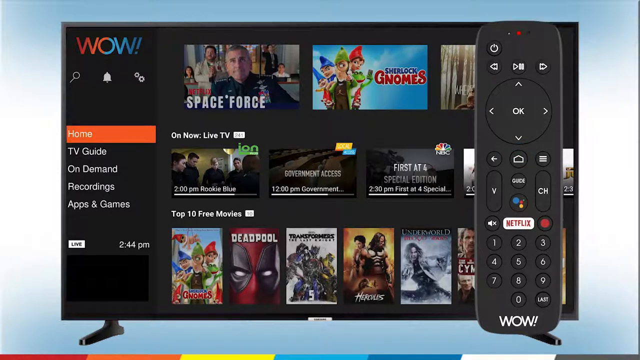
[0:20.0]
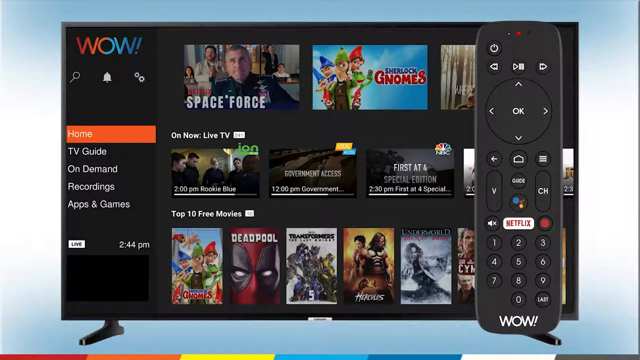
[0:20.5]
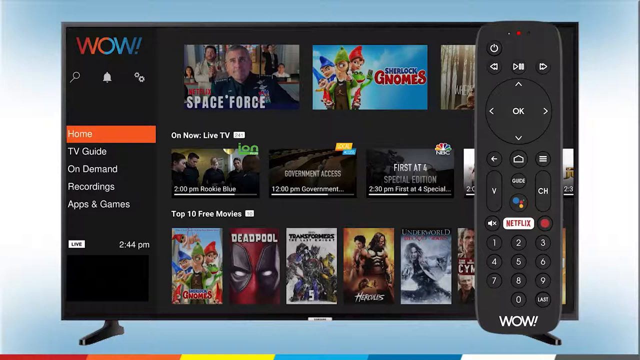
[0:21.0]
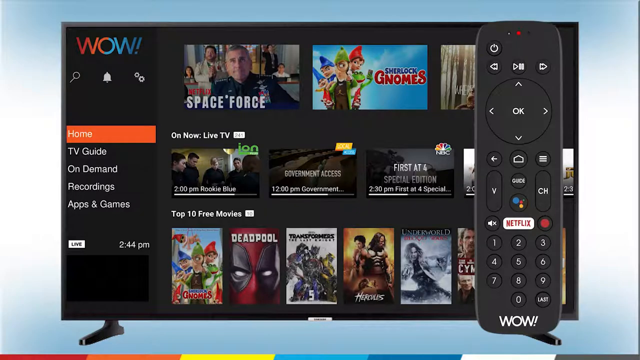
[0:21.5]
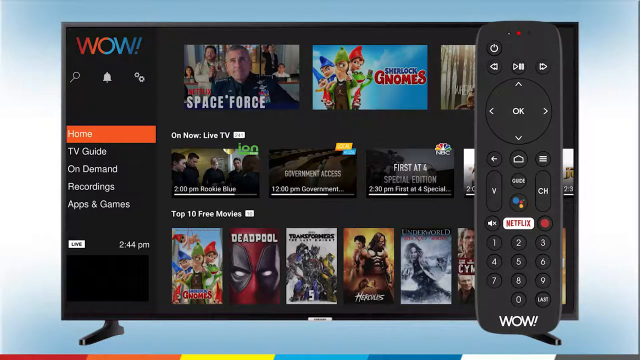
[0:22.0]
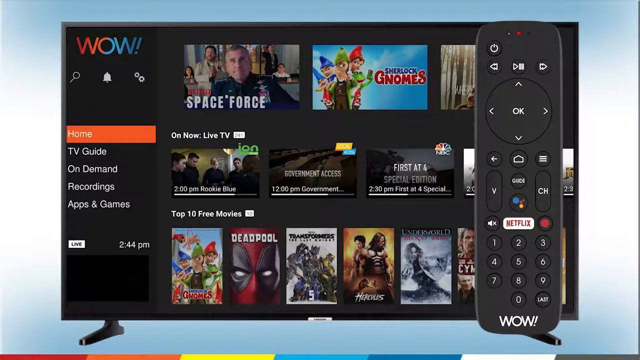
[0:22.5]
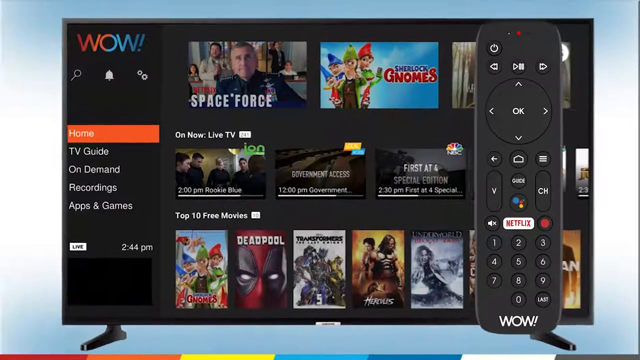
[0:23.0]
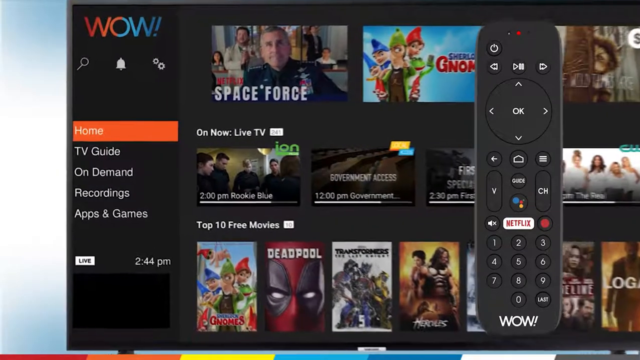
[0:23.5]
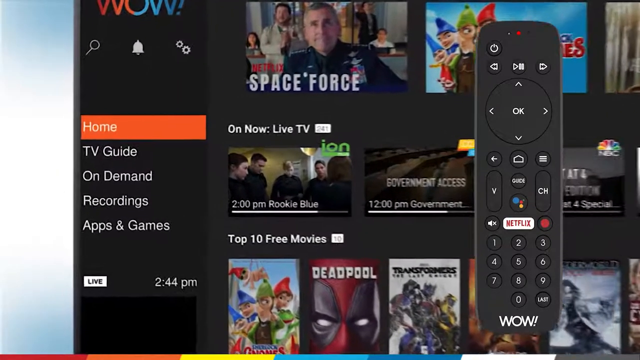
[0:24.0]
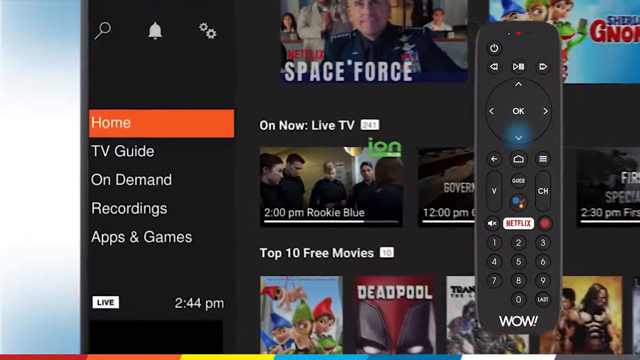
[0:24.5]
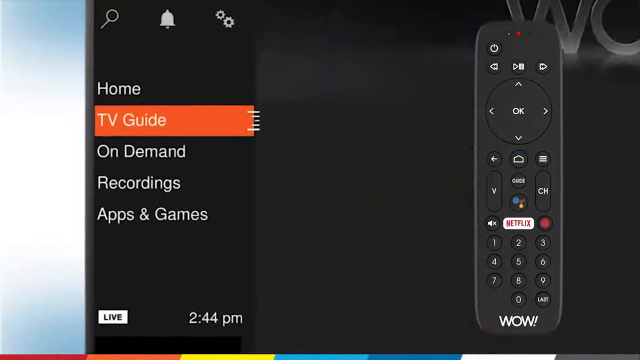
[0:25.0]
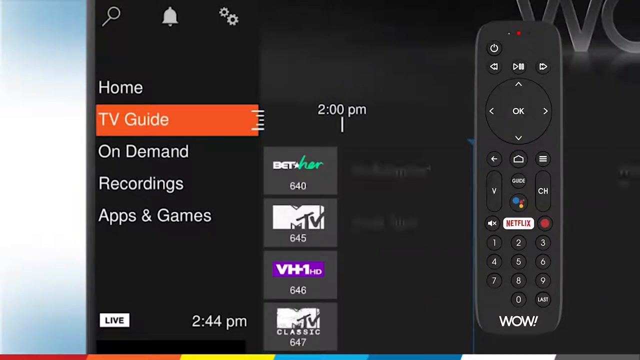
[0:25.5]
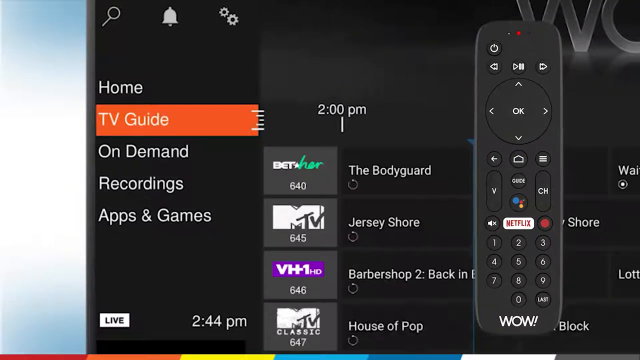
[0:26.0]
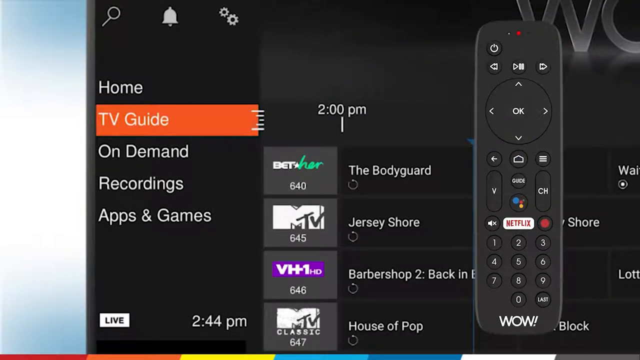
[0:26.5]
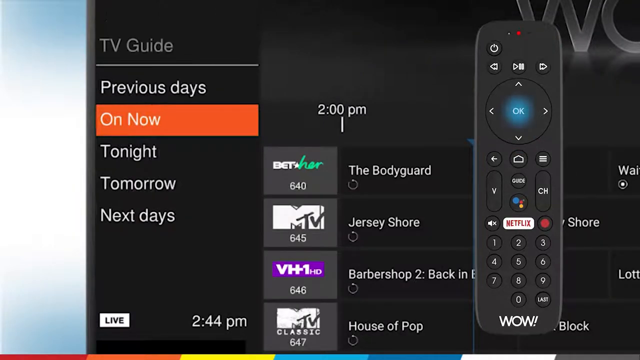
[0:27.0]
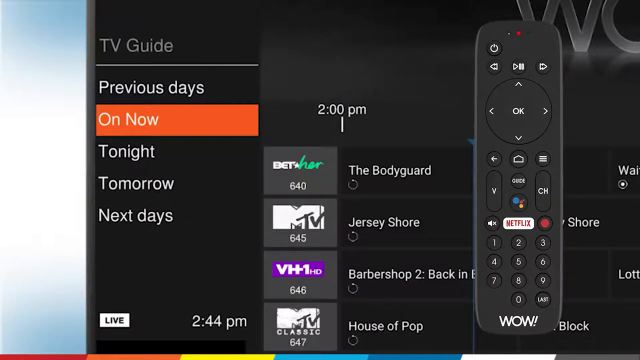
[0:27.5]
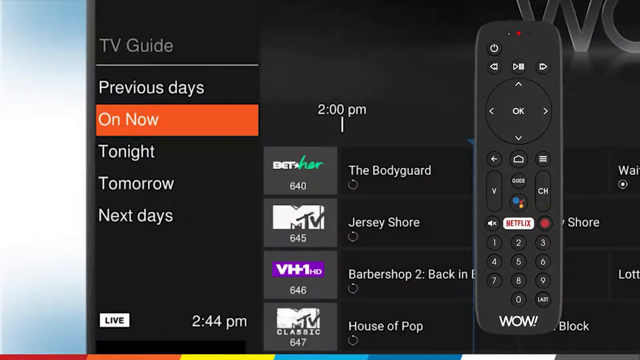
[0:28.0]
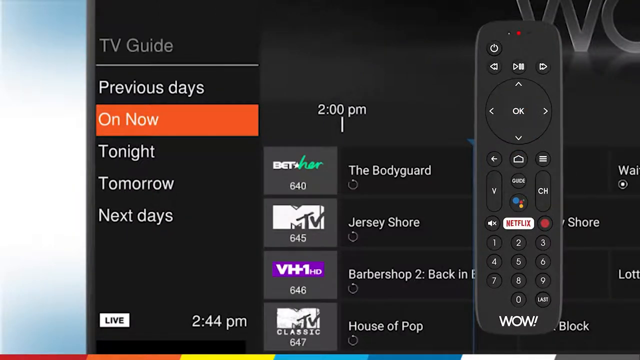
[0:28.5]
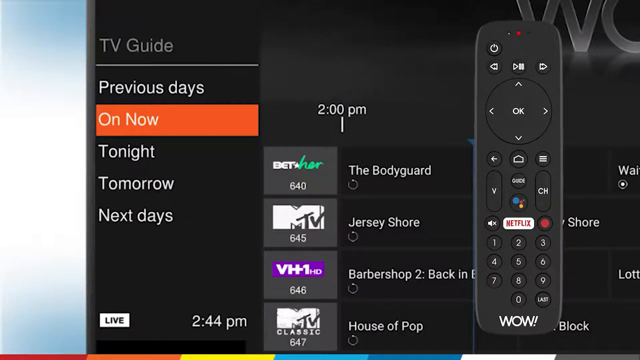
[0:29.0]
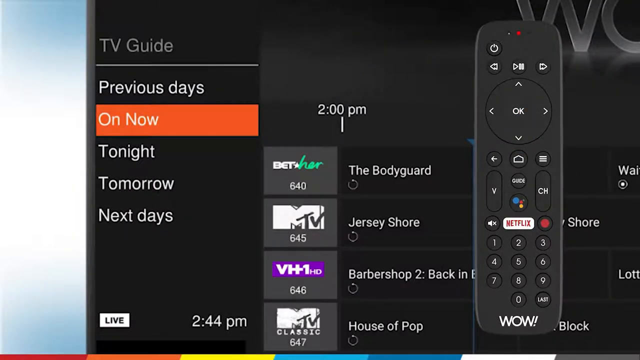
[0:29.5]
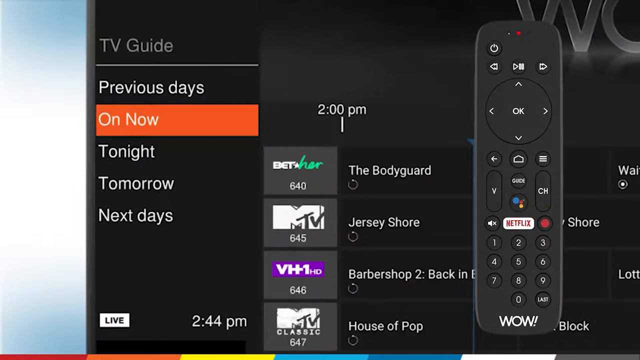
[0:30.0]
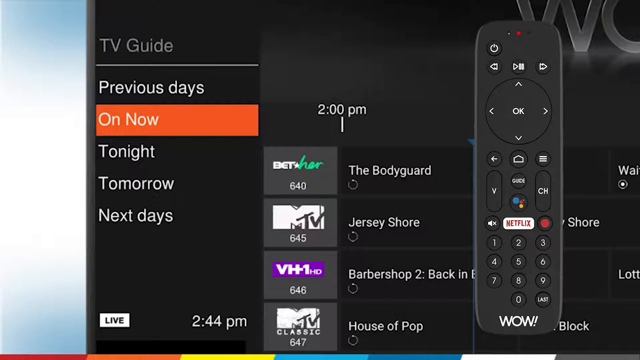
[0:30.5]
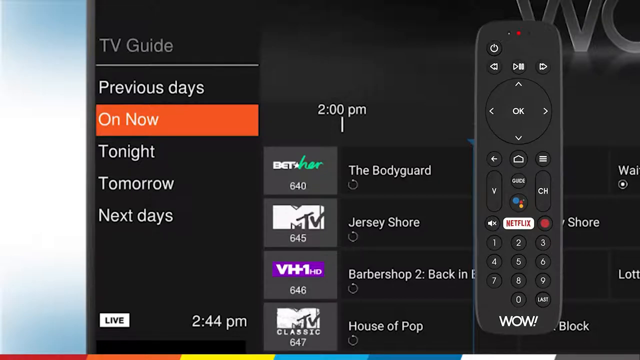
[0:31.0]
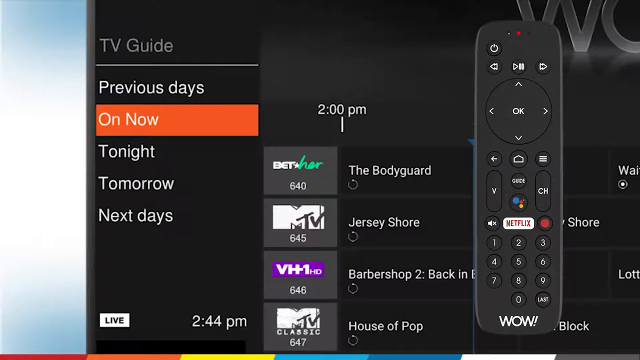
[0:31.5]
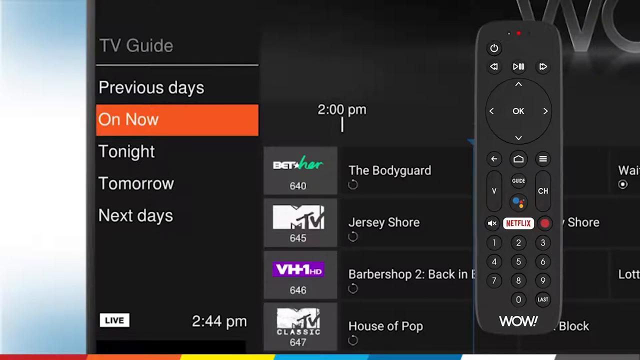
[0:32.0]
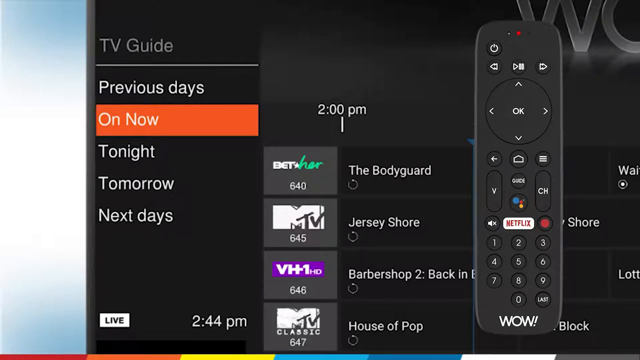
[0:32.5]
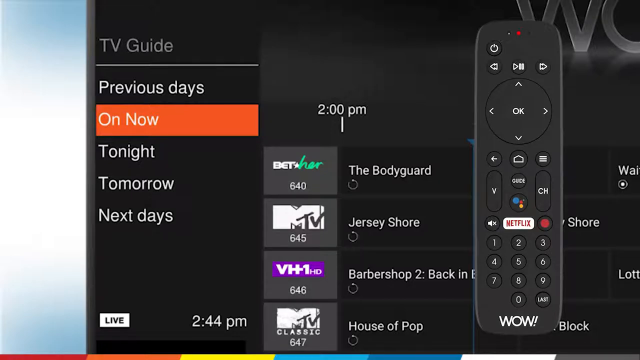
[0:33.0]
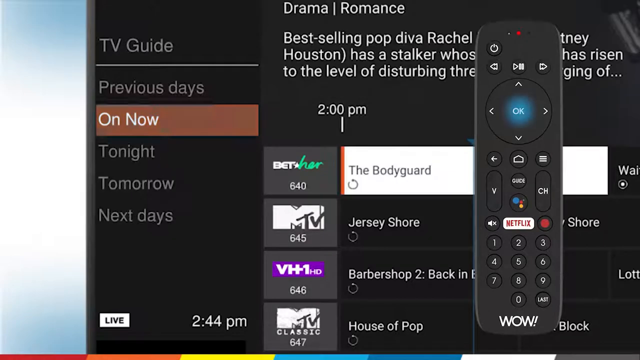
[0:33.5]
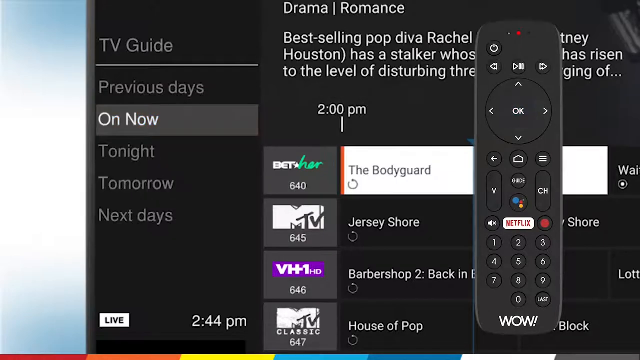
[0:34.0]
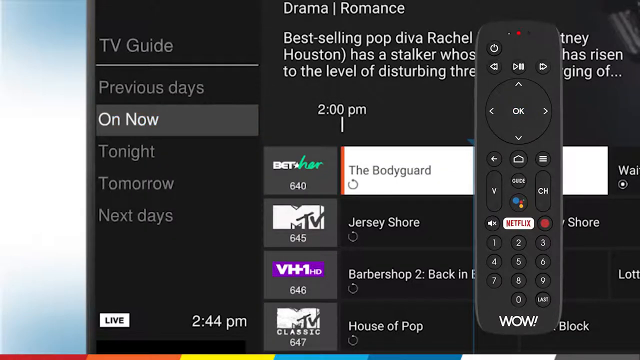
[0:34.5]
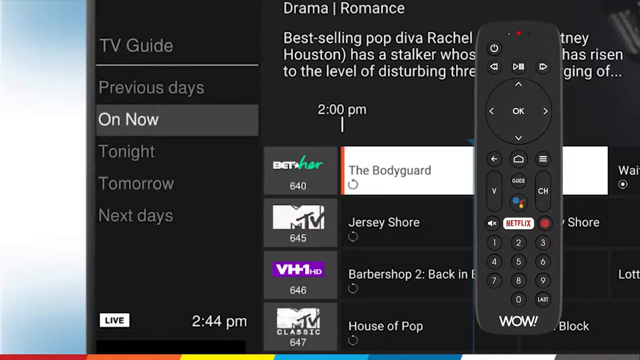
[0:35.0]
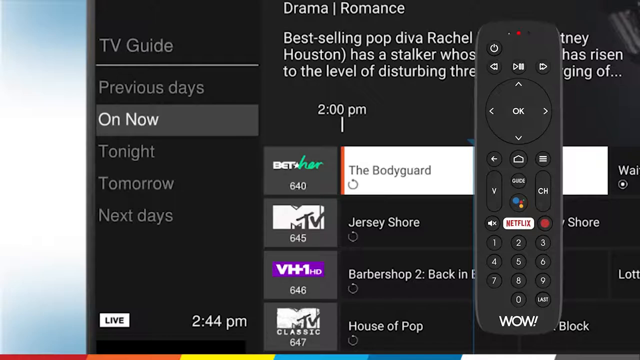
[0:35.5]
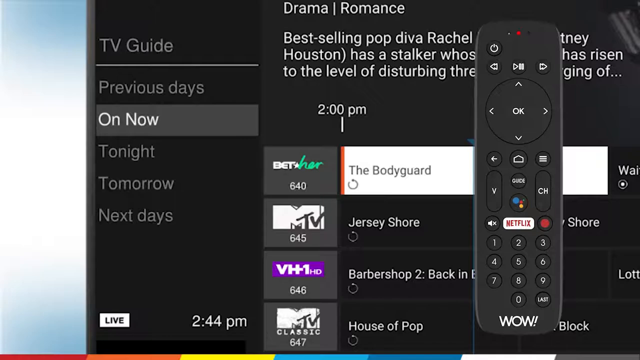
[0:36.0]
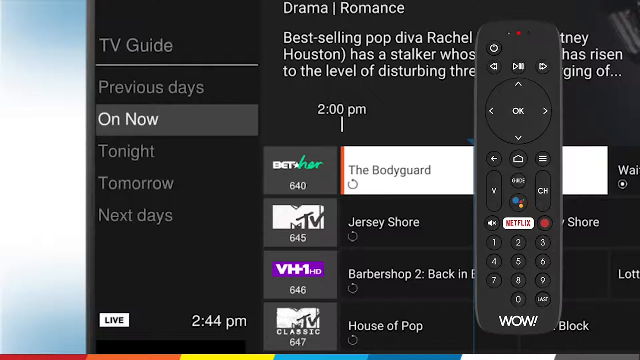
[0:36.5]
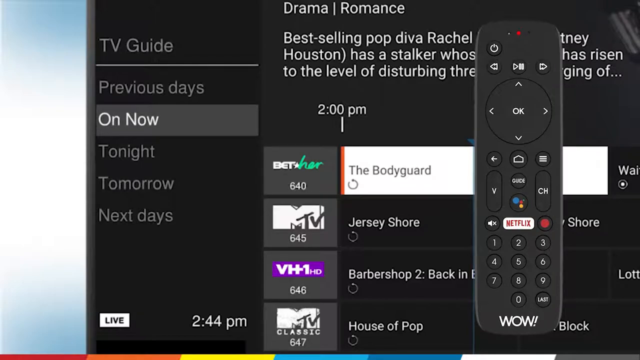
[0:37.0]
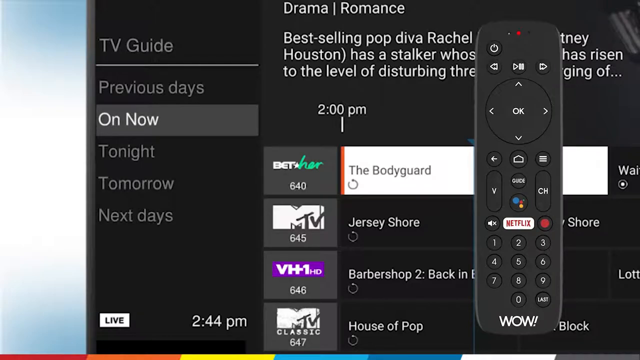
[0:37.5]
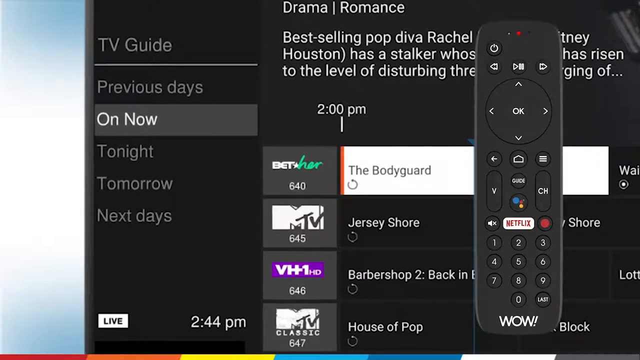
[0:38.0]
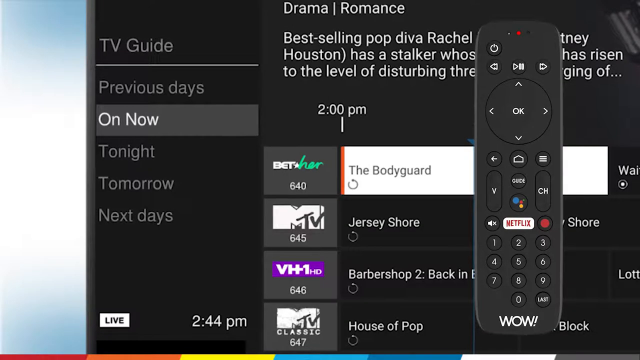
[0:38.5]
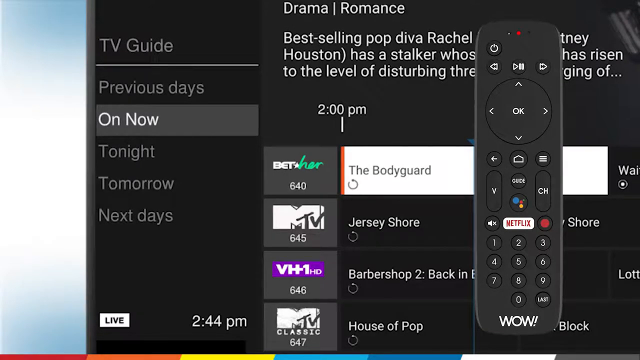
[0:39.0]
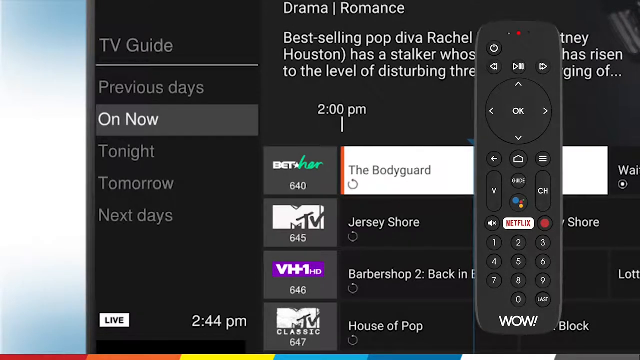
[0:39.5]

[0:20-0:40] The same screen with the television and the remote is shown. The view then zooms in, somewhat, toward the left side of the television while the remote stays on the right side. The bottom button on the remote appears to be pushed, and on the right side a little orange line goes from the home screen down to TV Guide. The television screen then goes, more or less, to the TV Guide and shows the available channels. The remote then highlights the OK button, and the selection goes to a small option on the side that says "on now". The screen seems to stay like this for a few seconds, and then it appears to highlight what is on the television now. The camera stays on this section for the rest of the shot.